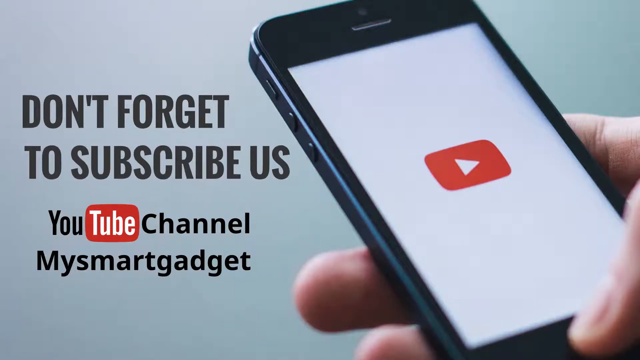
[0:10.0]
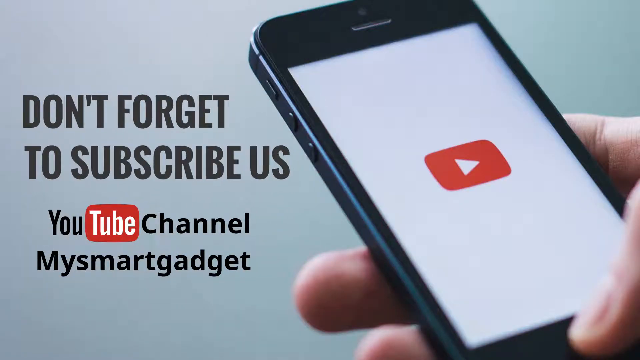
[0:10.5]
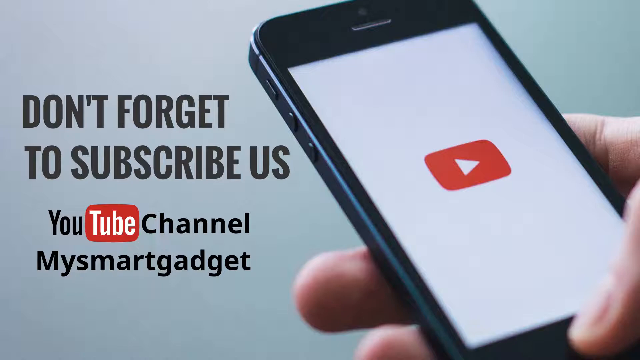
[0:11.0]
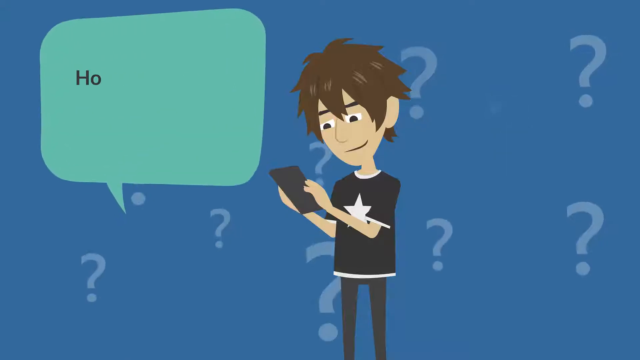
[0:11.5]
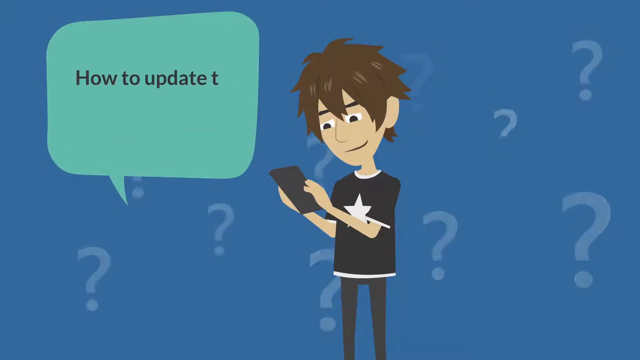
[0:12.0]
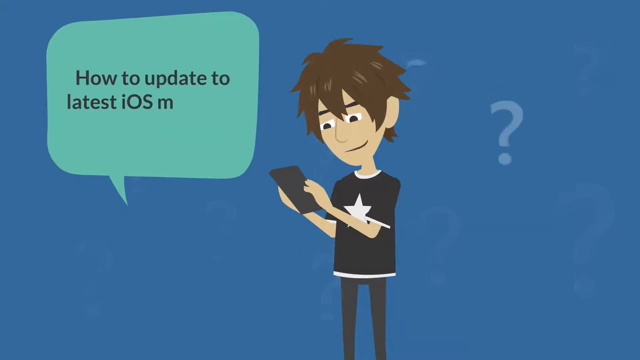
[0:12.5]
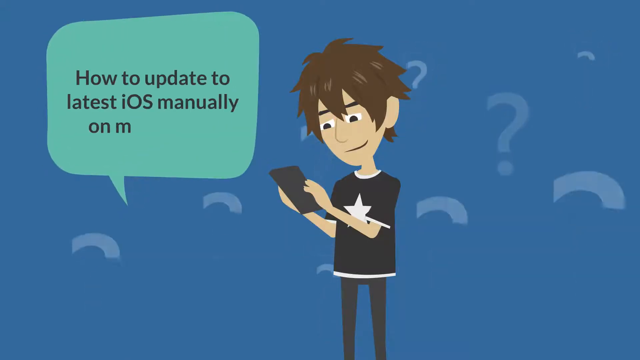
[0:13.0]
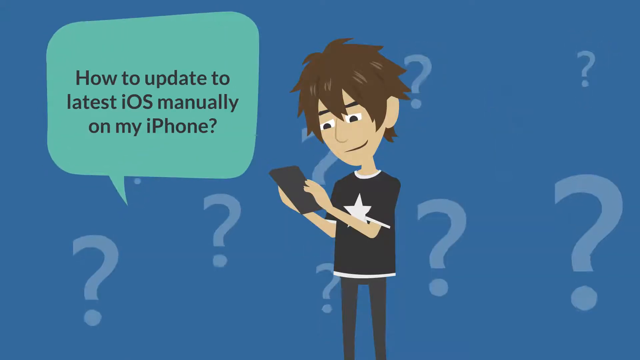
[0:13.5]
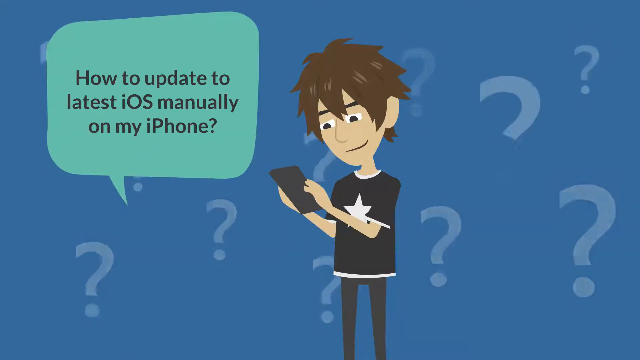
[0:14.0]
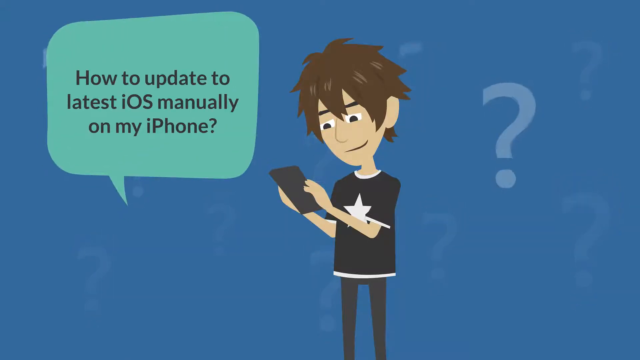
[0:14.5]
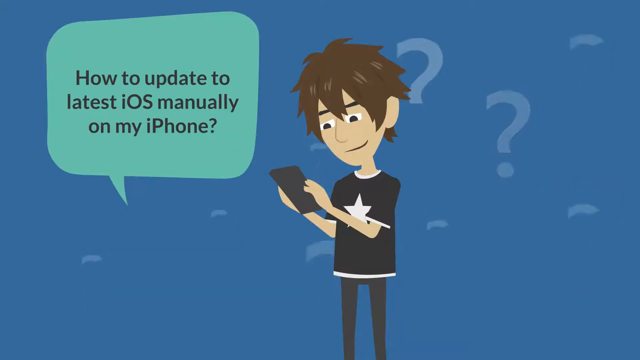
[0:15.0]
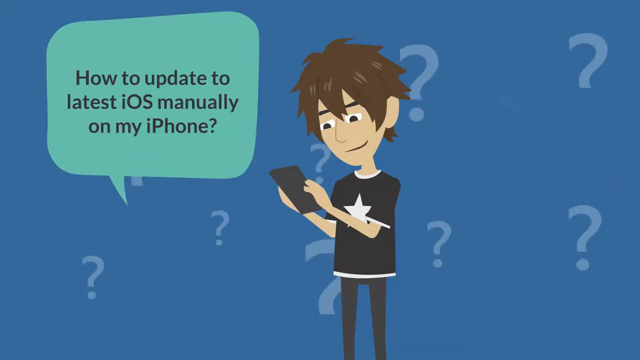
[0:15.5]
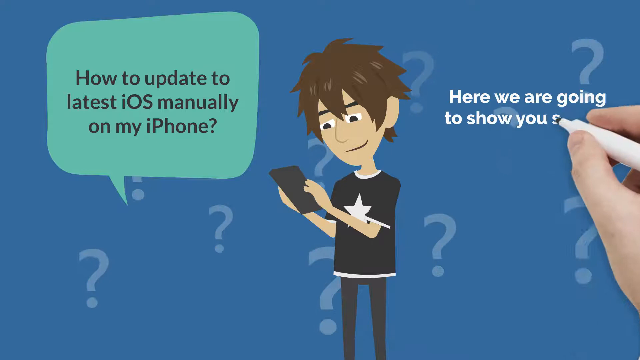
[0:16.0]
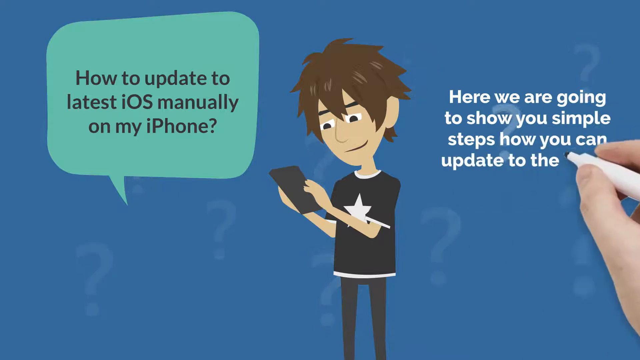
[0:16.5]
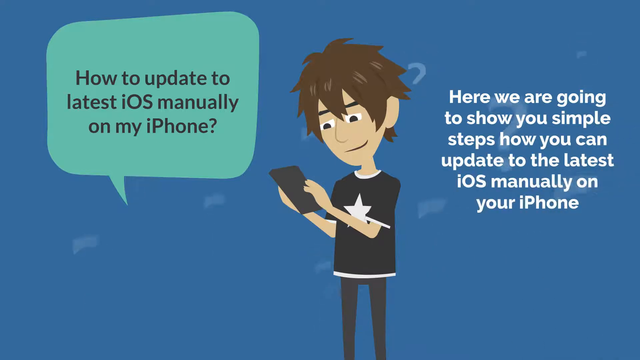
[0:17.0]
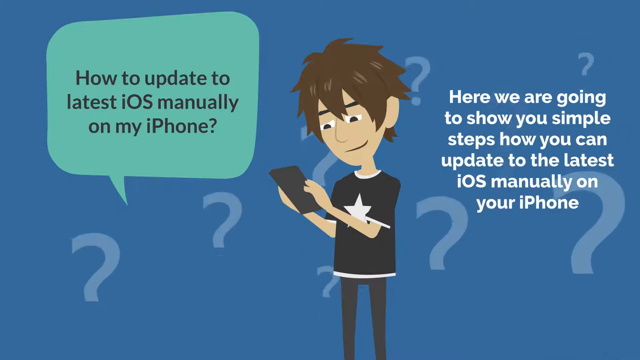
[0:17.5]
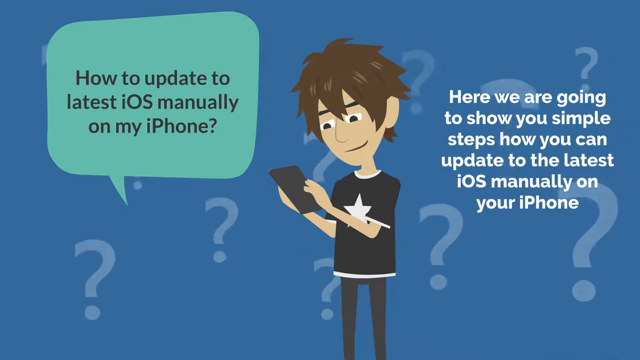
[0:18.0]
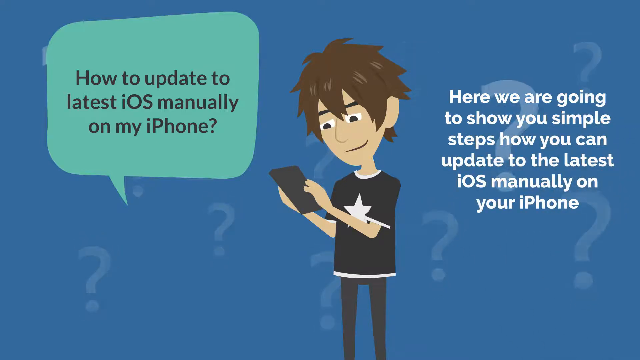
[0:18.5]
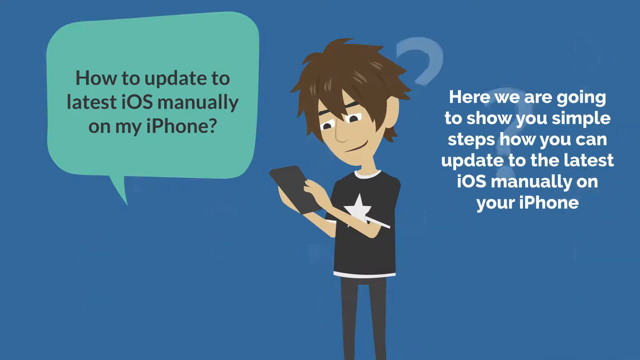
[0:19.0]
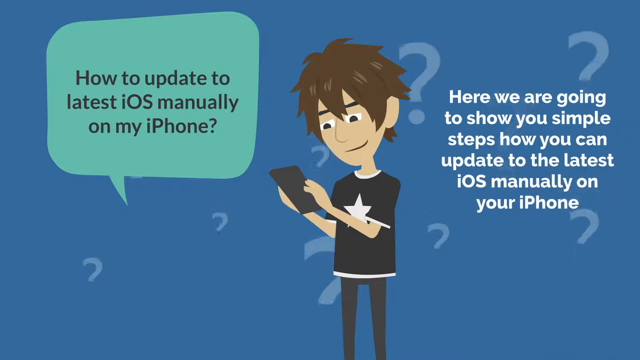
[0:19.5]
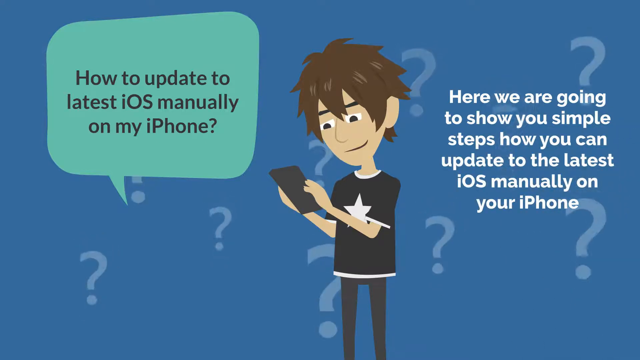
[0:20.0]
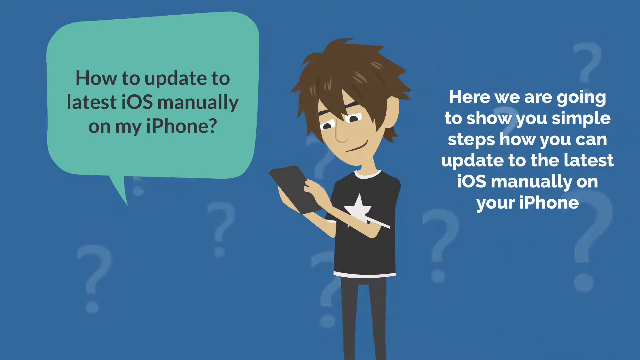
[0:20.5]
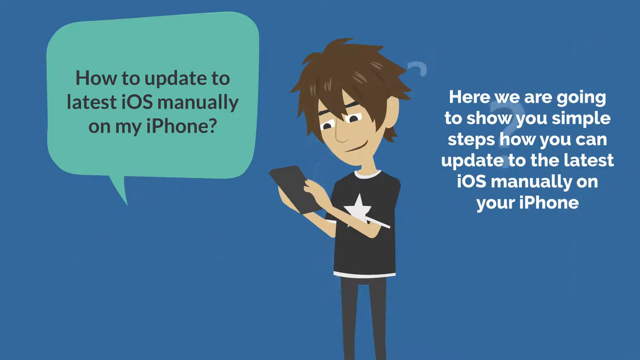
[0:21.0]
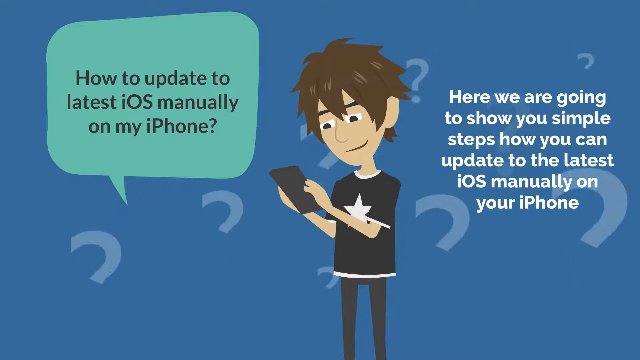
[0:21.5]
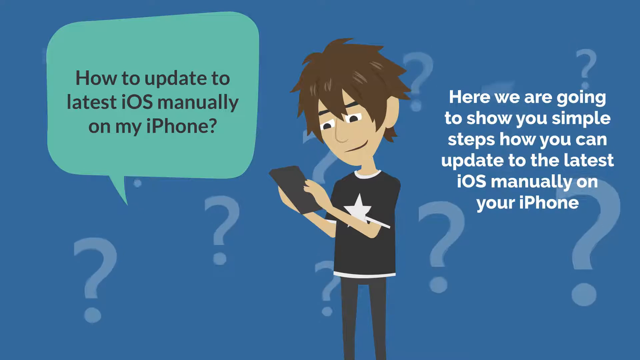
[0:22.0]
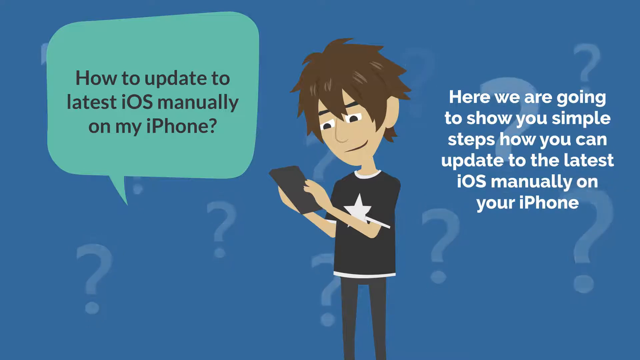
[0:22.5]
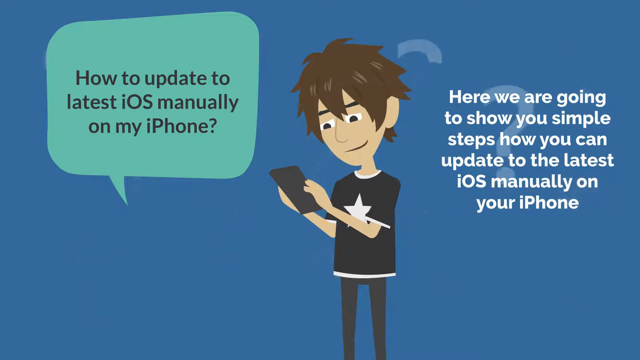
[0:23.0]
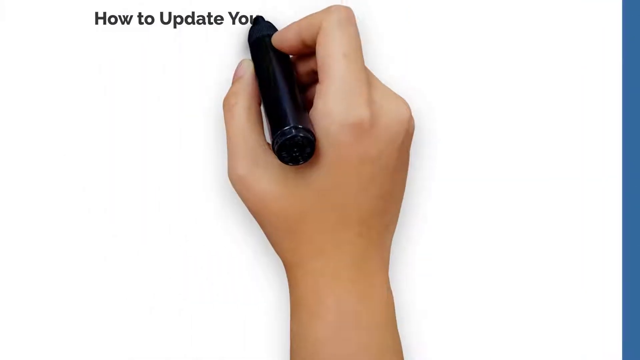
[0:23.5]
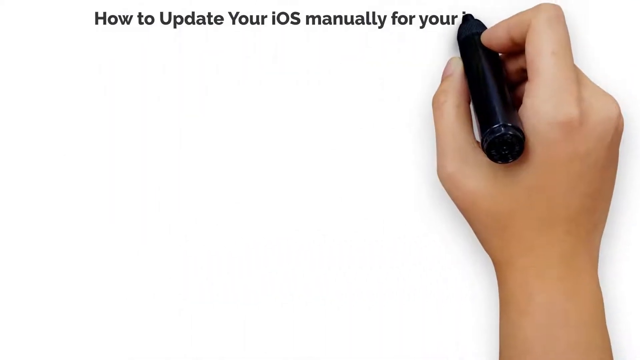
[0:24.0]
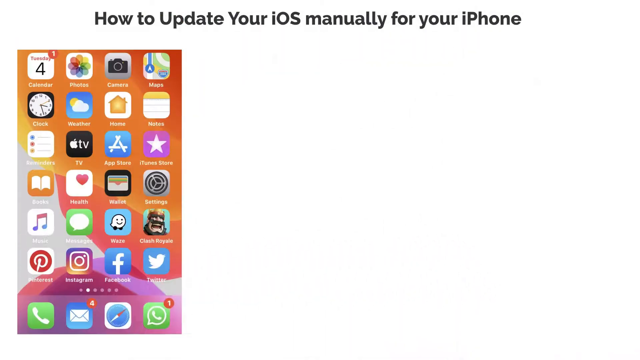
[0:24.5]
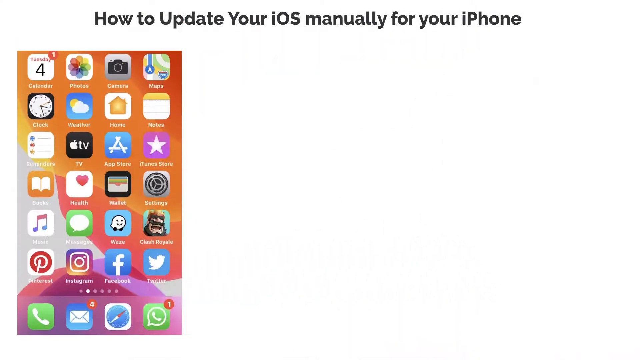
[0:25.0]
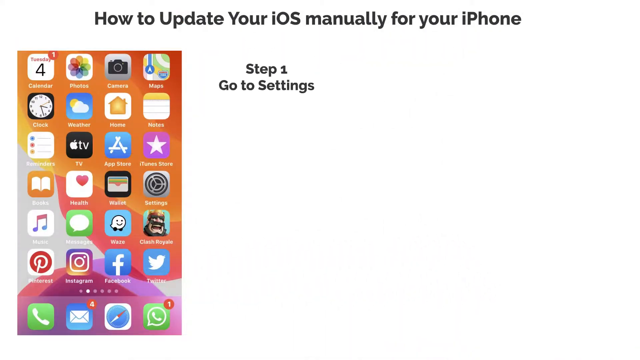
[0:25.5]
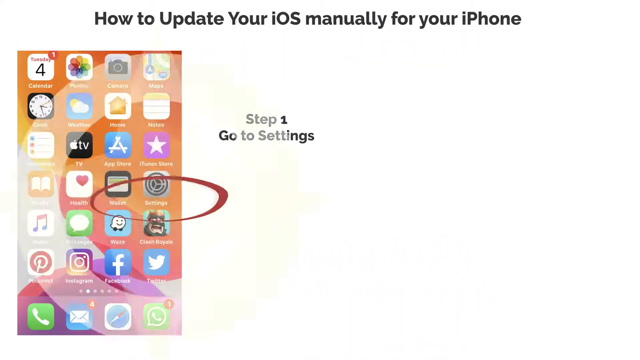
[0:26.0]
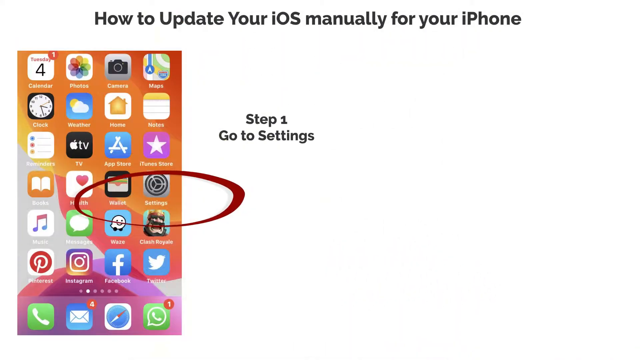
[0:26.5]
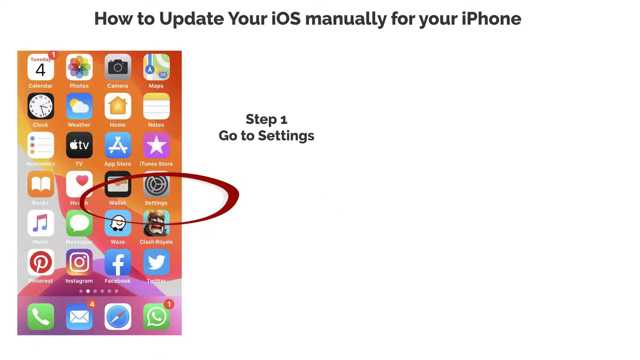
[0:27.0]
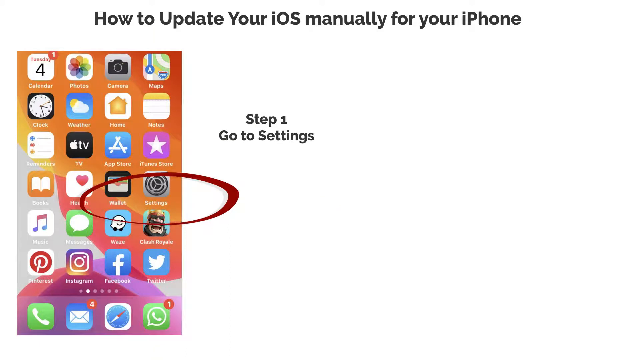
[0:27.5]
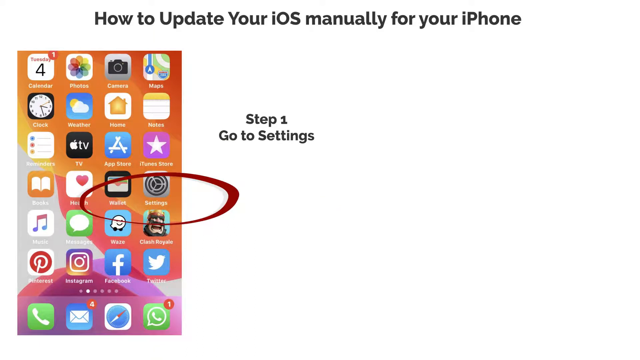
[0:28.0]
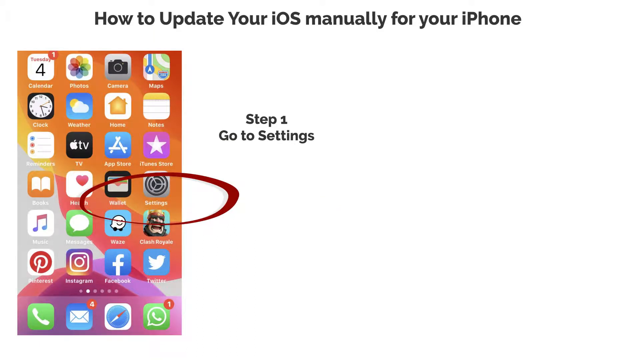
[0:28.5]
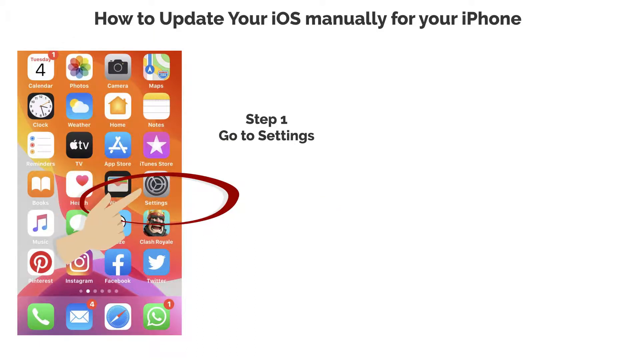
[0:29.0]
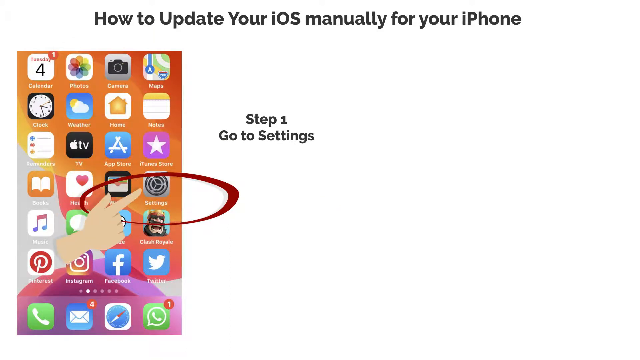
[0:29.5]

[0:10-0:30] An illustration shows a white man in a black shirt with a star on its chest, holding a cell phone, against a blue background with a number of question marks, maybe eight to ten. A green illustration-style text box contains the text "how to update to latest ios manually on my iphone", in what seems to be dark blue or a color close to black. The question marks move around, and then a hand holding a white pen appears and writes "here we are going to show you simple steps how you can update the latest ios manually on your iphone". The screen holds for a while, and then another screen appears where a hand with a black pen writes "how to update your ios manually for your iphone". This screen has a white background with black text, and on the left side is what looks like an iPhone screen with many icons. Text appears from the top of the screen and scrolls to the middle, reading "step one go to settings". An illustration highlights the settings icon, and apparently a hand illustration shows how to click it.